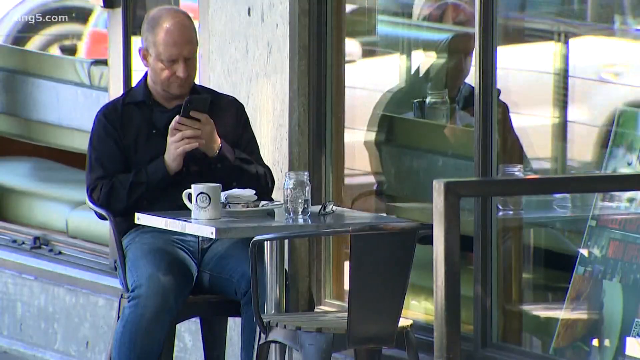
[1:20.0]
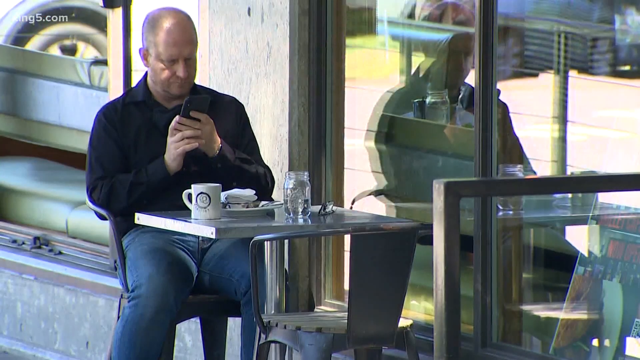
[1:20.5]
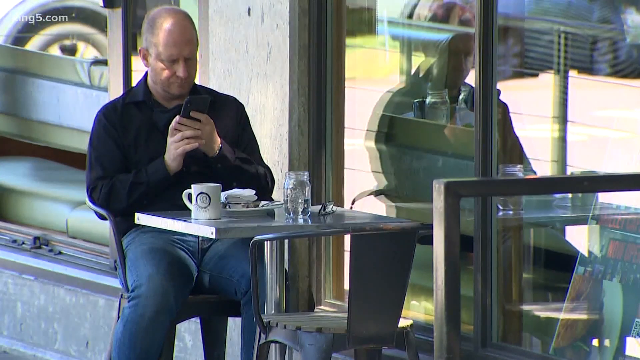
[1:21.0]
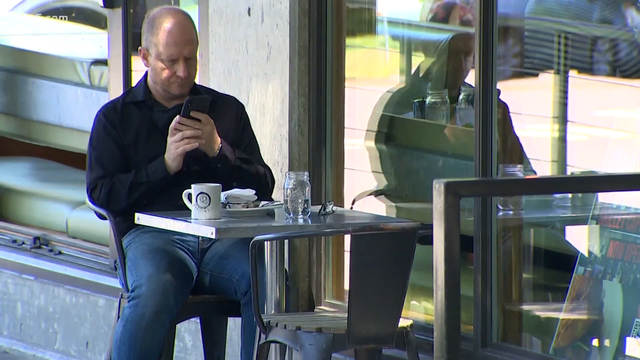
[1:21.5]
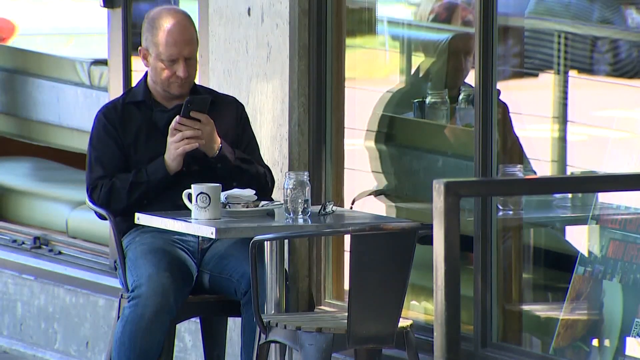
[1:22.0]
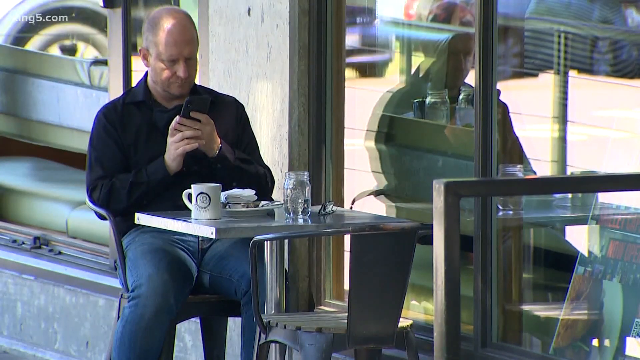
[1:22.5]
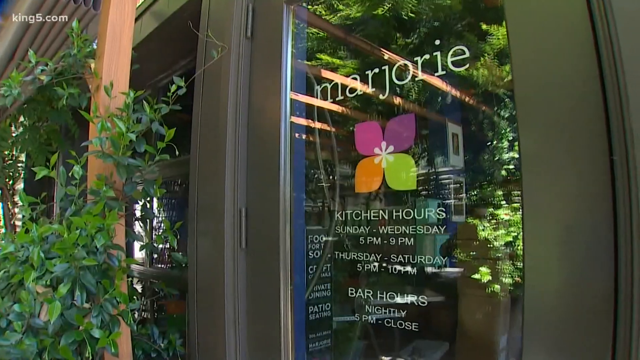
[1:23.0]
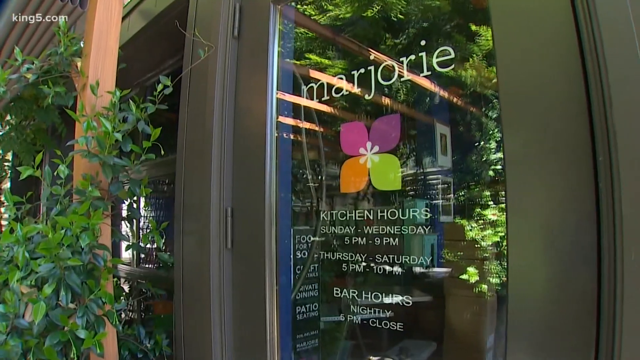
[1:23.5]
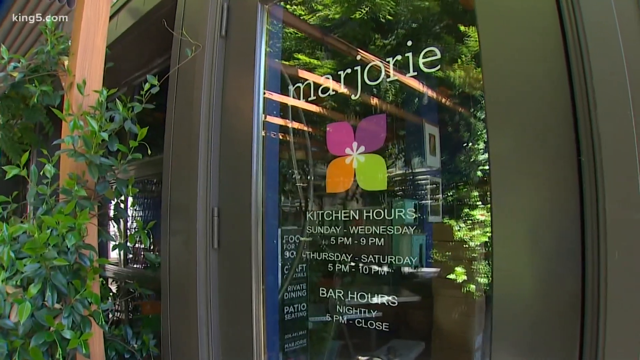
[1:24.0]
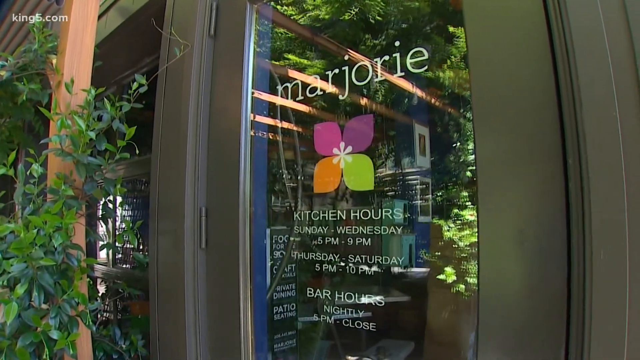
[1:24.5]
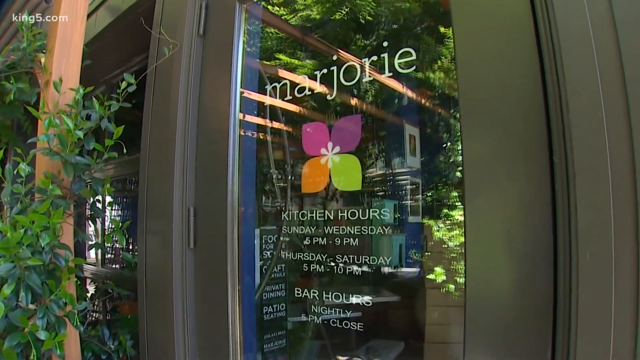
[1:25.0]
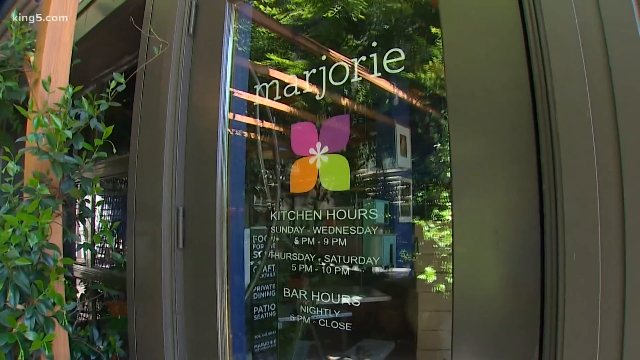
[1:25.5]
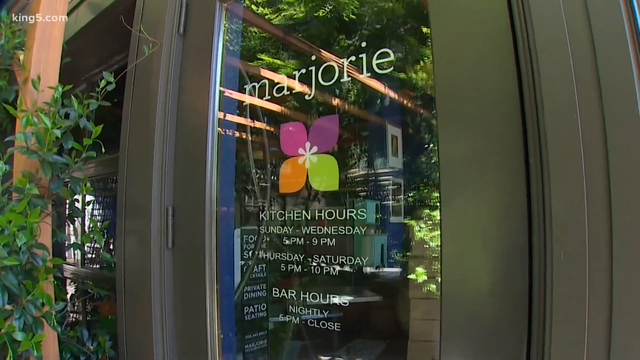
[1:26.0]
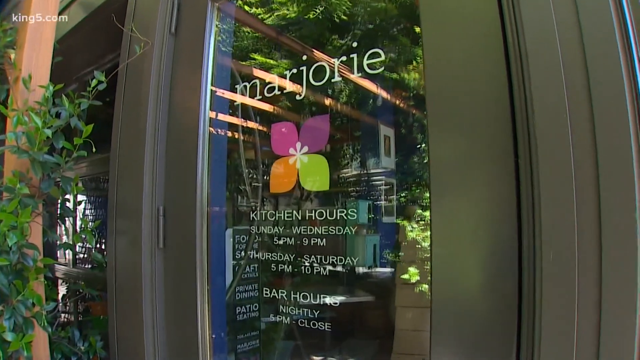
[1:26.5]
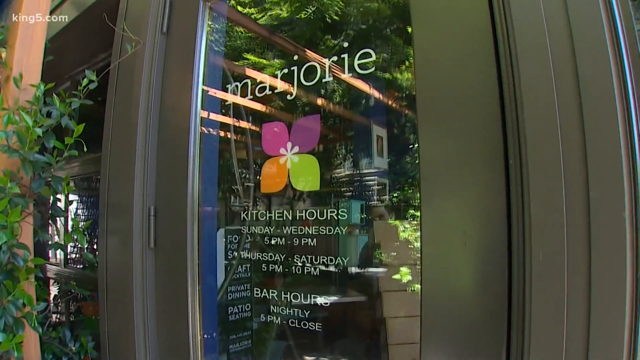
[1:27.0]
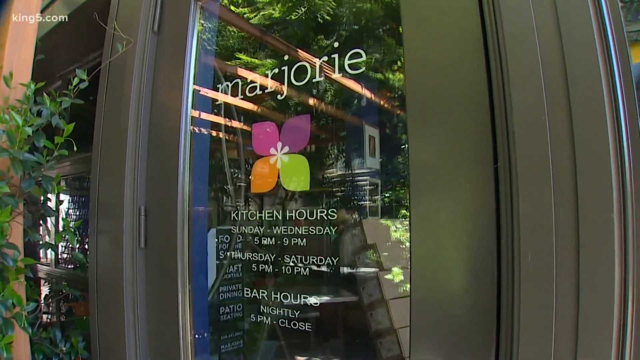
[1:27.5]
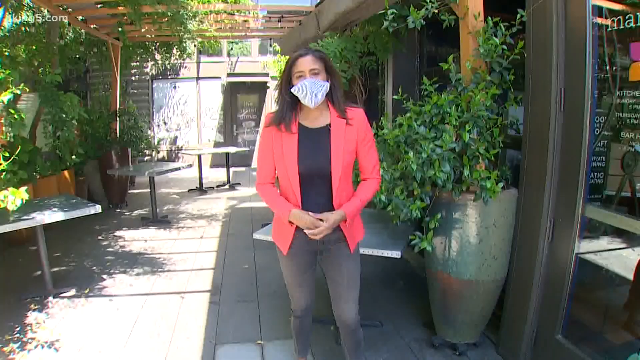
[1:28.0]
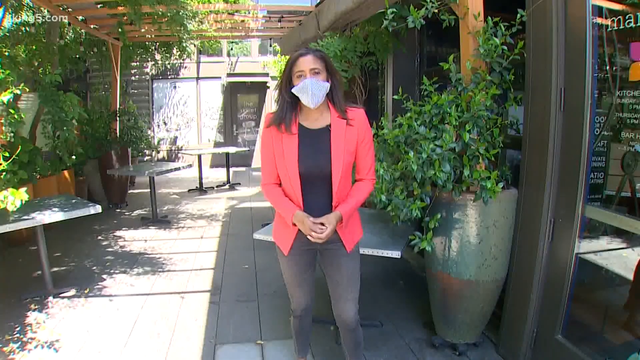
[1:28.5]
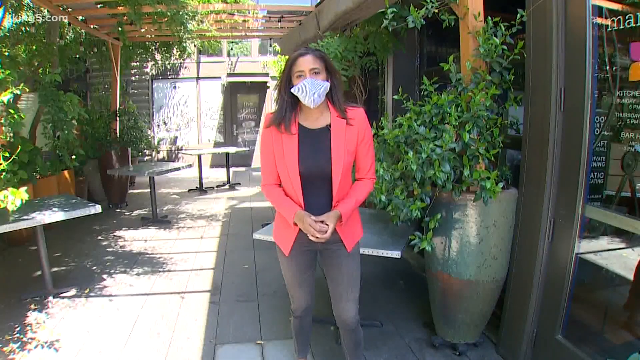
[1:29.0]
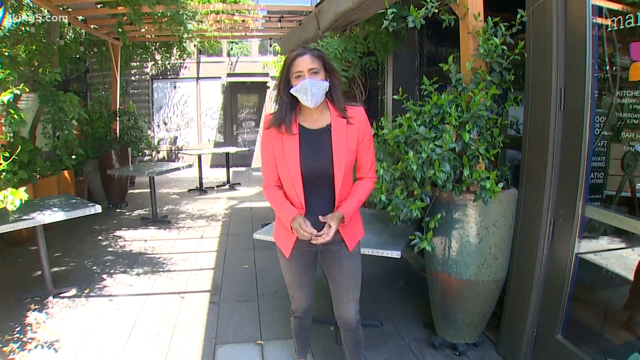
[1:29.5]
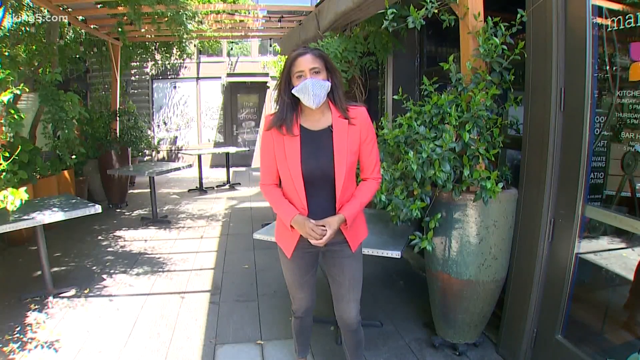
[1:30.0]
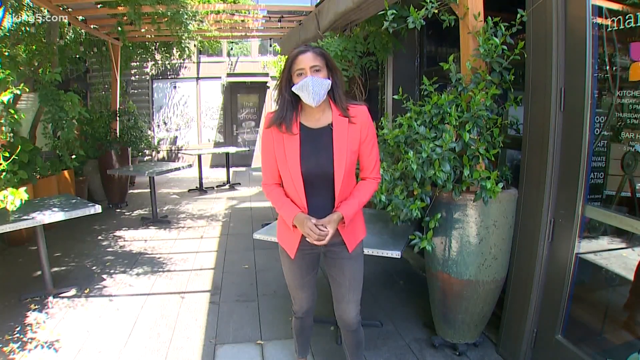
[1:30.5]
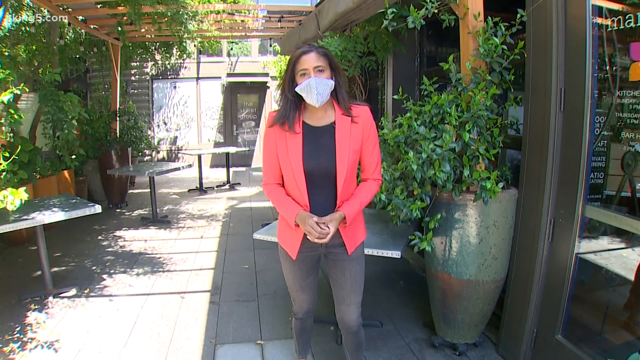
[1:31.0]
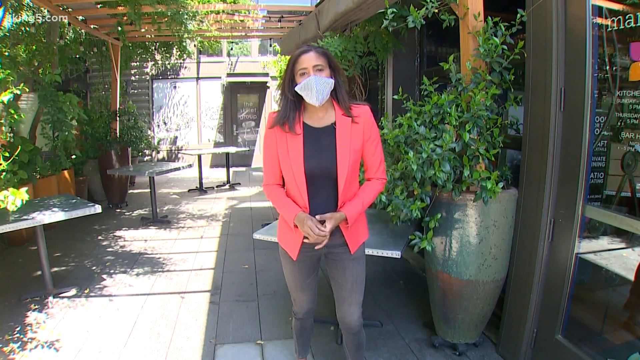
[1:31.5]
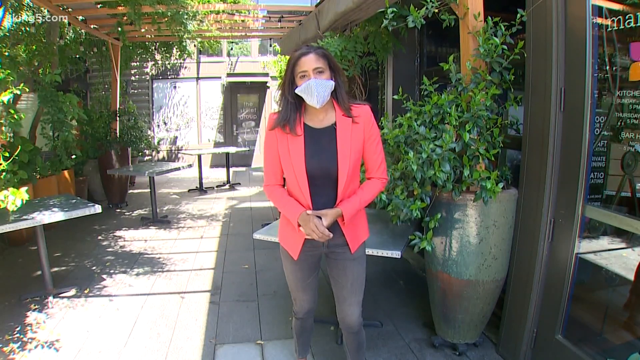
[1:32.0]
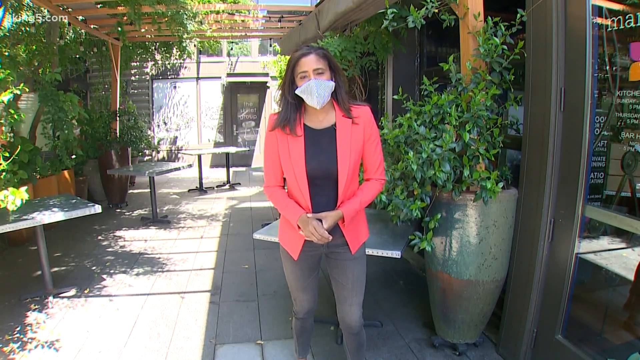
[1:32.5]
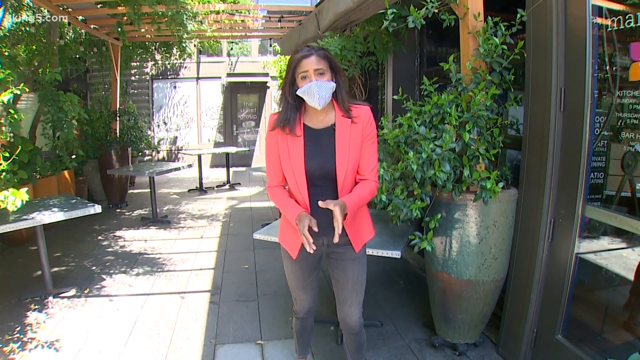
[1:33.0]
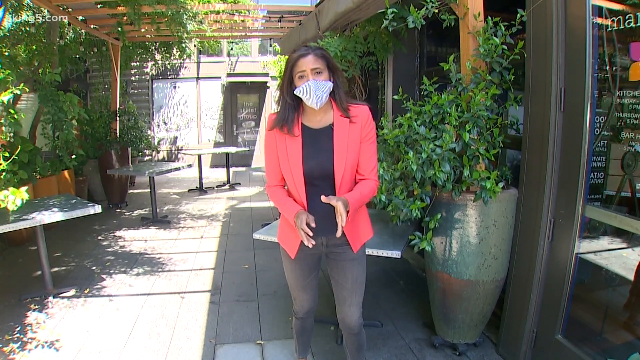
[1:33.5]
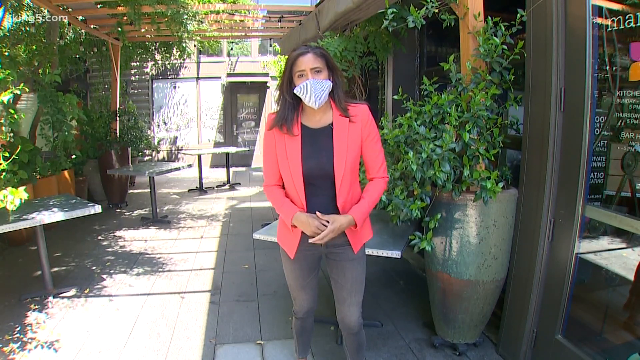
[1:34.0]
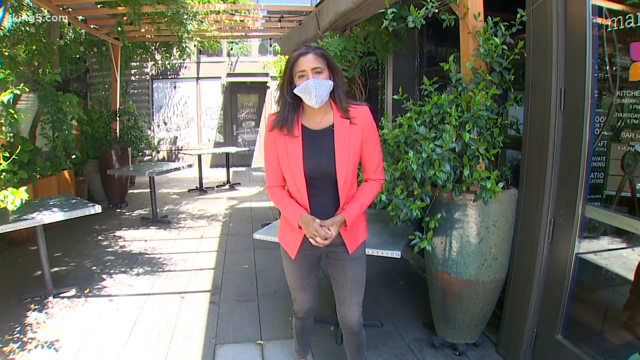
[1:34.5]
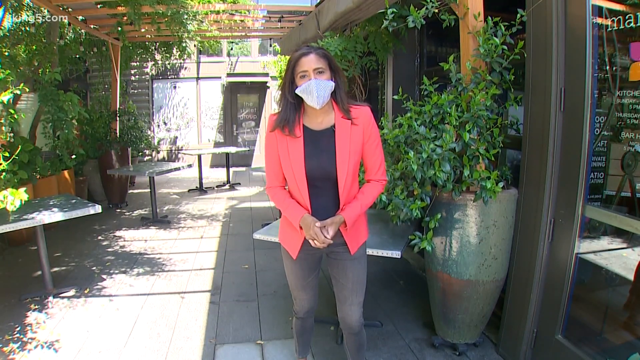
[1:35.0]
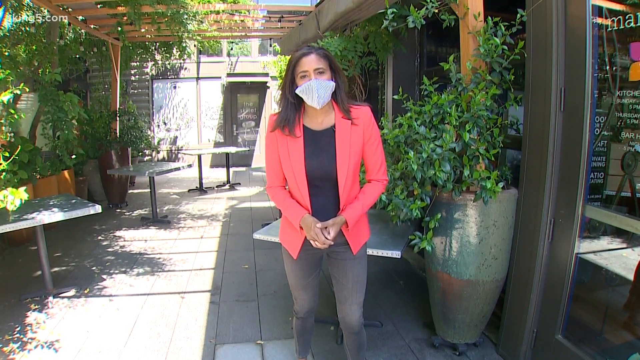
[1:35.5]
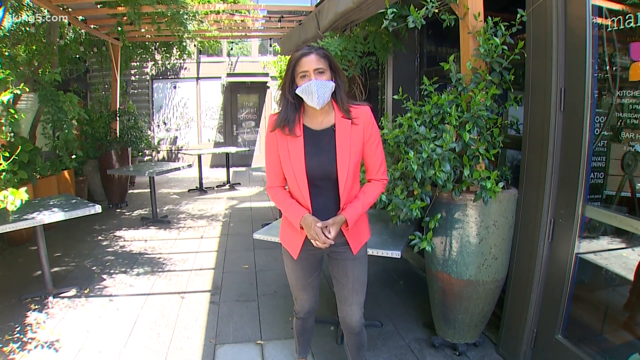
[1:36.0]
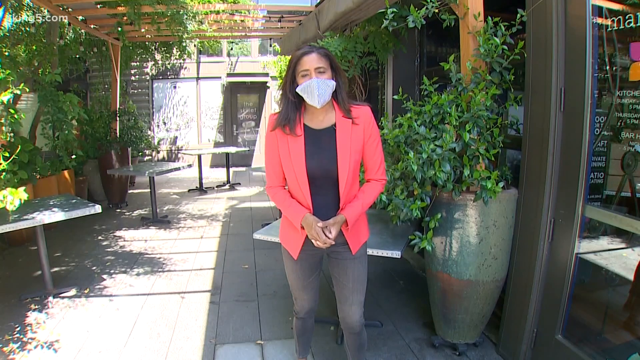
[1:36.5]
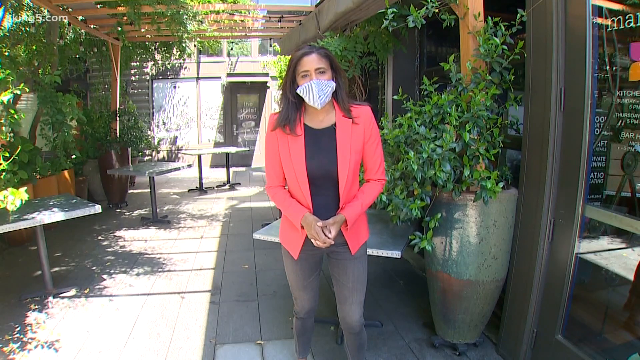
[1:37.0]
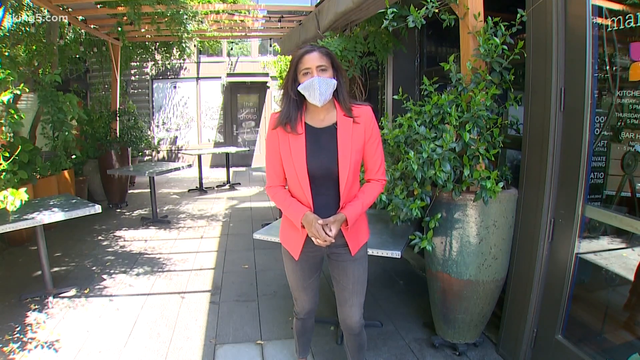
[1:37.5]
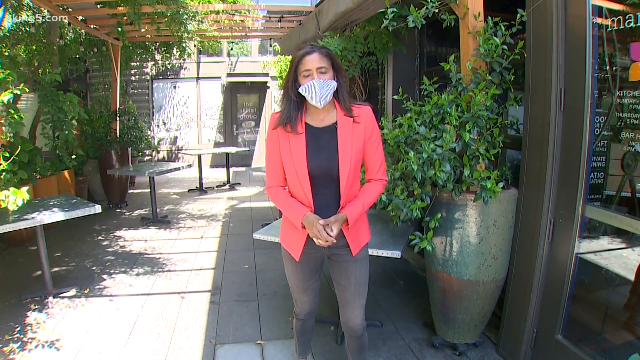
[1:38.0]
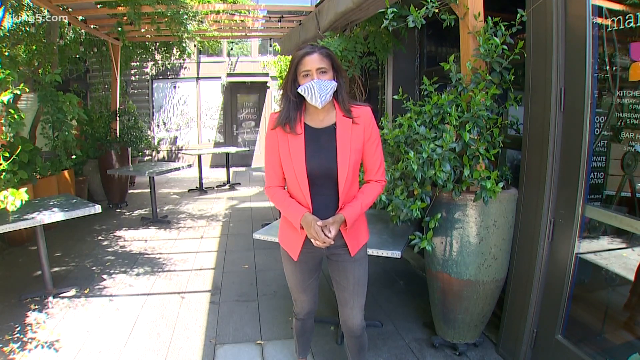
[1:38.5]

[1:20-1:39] A man who looks like he might be an architect is shown with plans for extending the restaurant out onto the sidewalk. People are then shown having coffee or something, and a man is on his phone in front of Marjorie Restaurant. The restaurant has a bar and plants all around. There are no chairs with the tables yet; the tables are square, with a bar underneath and a single stem, and look kind of like they are from the 1960s.